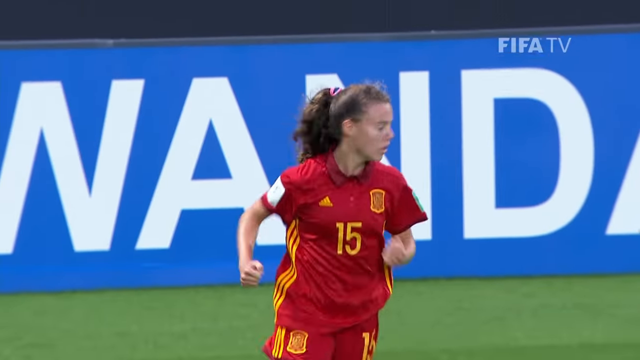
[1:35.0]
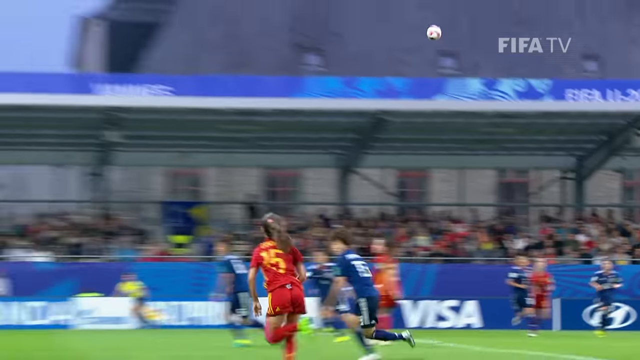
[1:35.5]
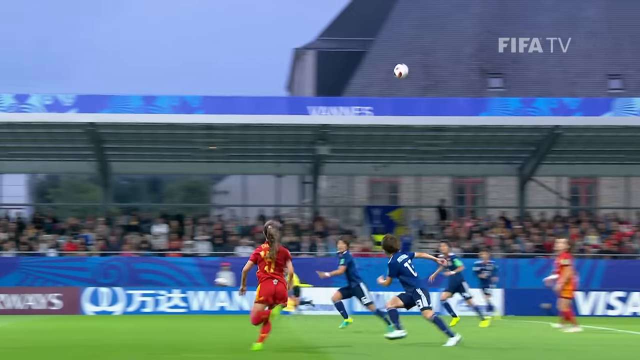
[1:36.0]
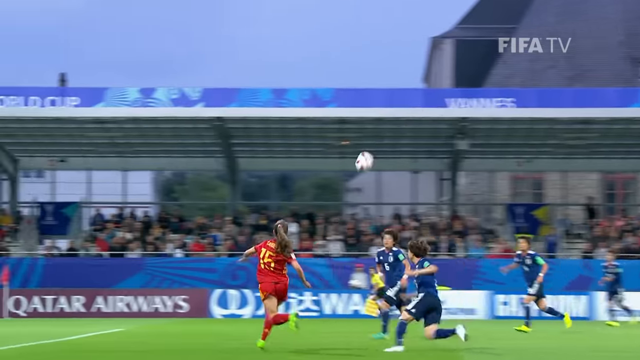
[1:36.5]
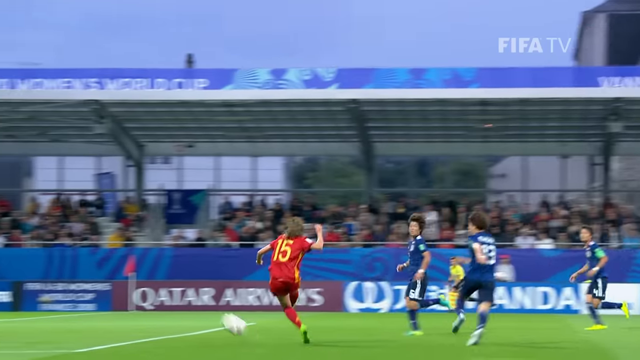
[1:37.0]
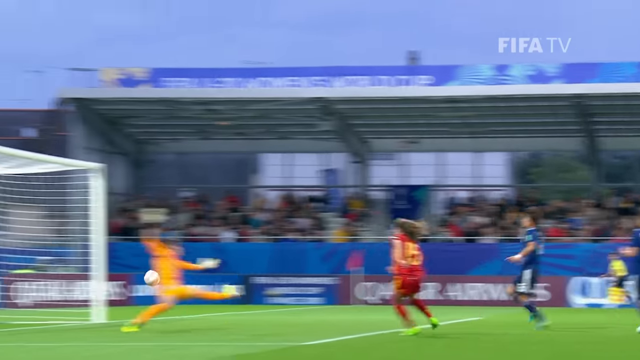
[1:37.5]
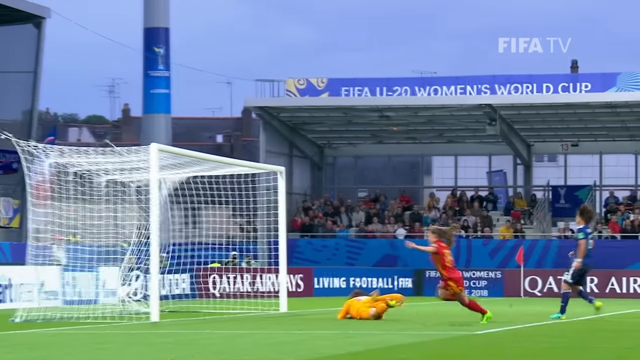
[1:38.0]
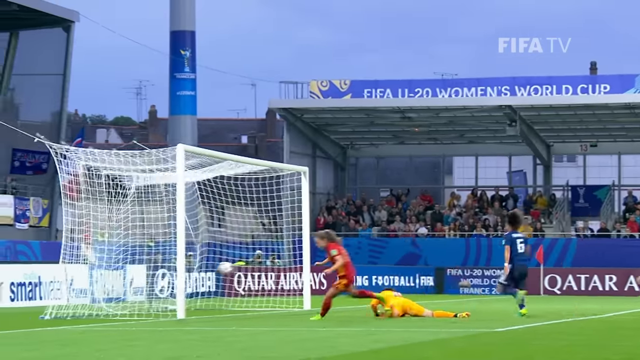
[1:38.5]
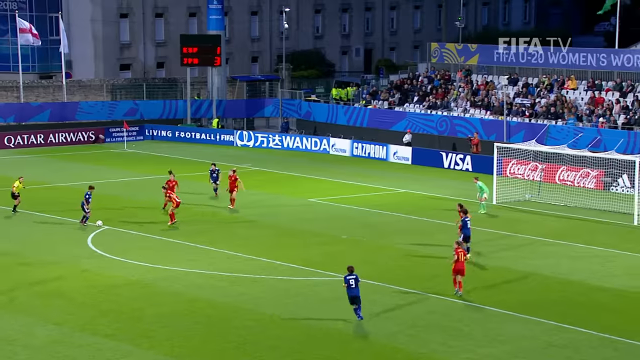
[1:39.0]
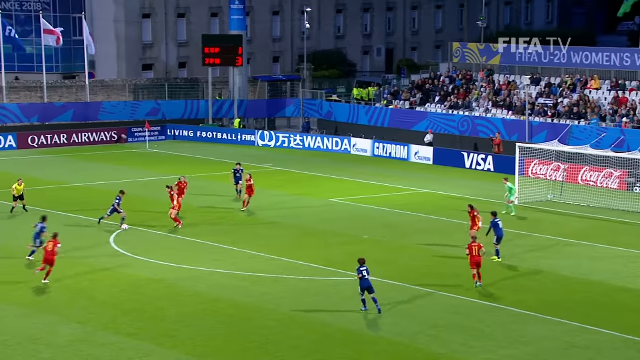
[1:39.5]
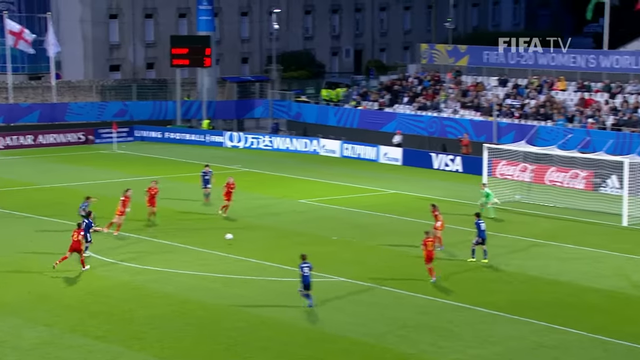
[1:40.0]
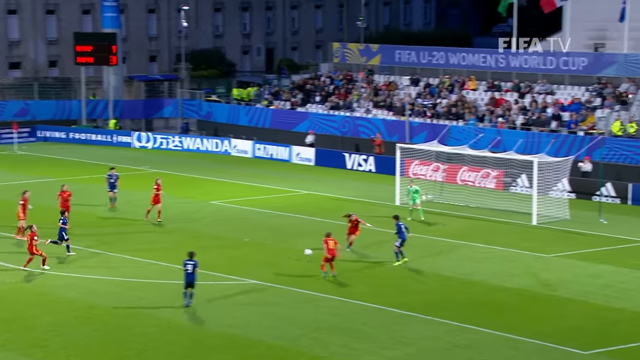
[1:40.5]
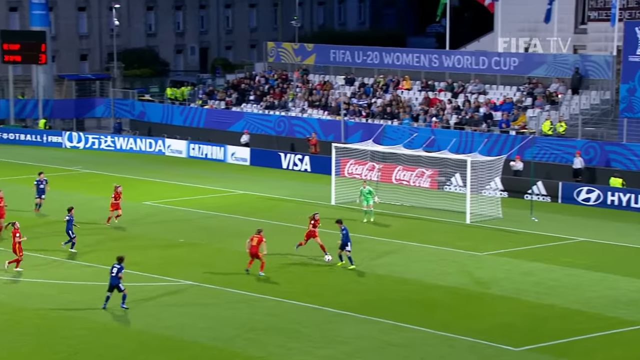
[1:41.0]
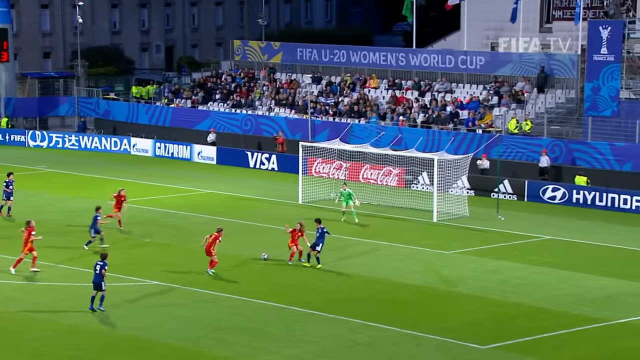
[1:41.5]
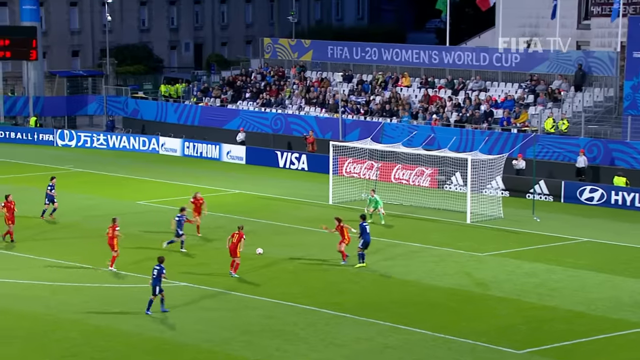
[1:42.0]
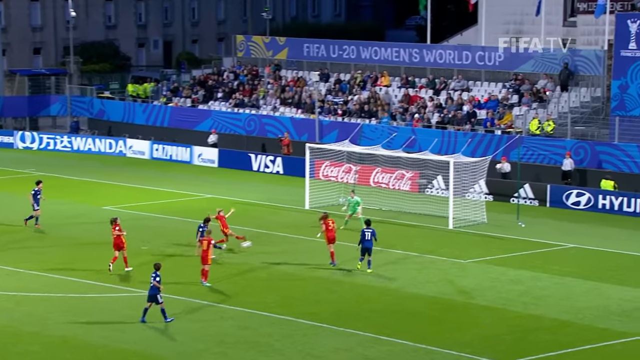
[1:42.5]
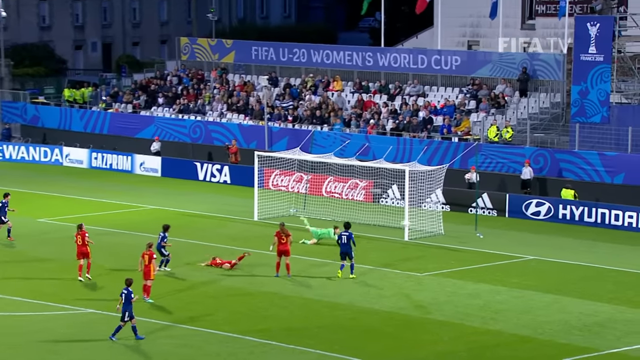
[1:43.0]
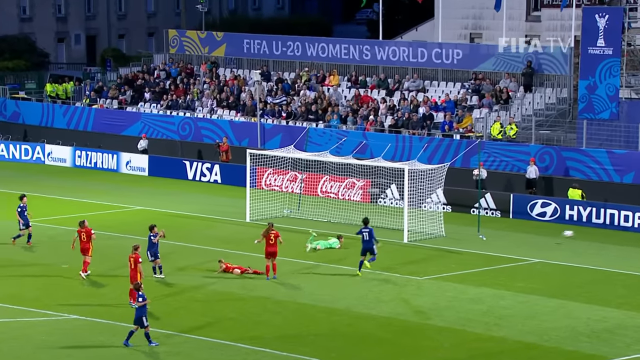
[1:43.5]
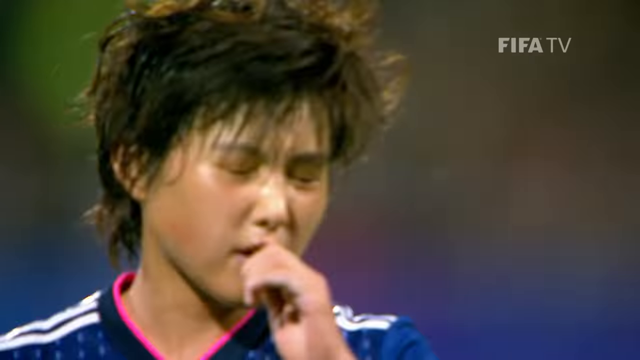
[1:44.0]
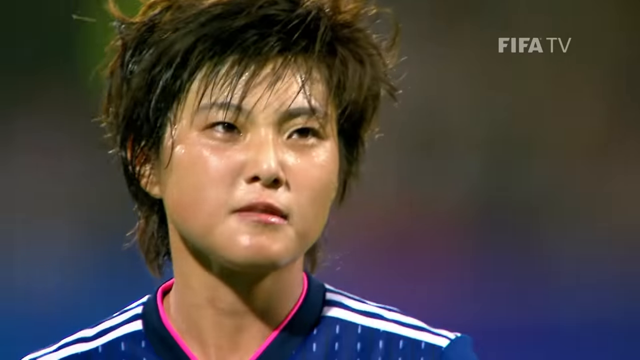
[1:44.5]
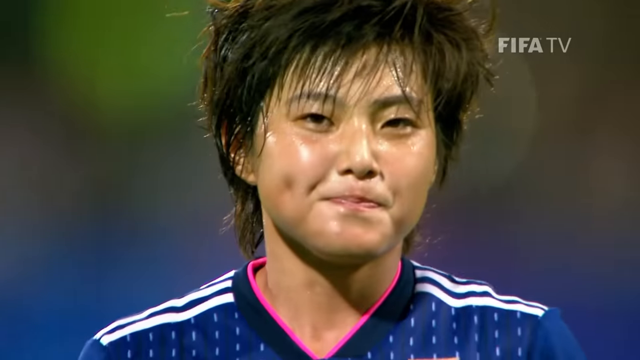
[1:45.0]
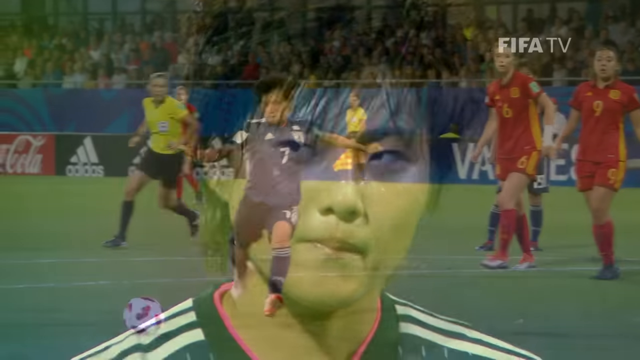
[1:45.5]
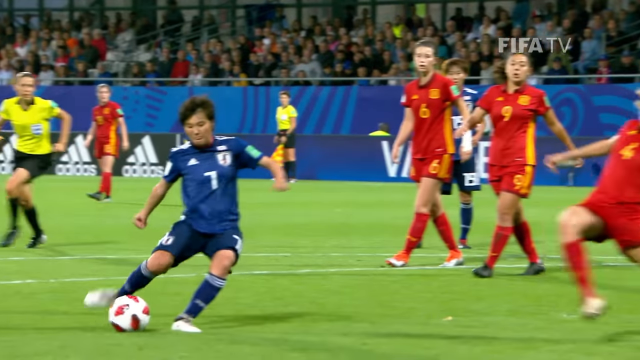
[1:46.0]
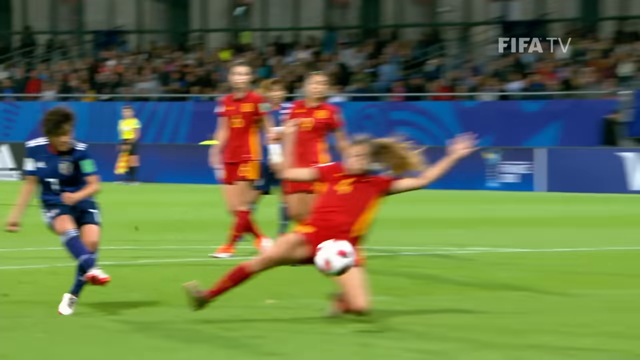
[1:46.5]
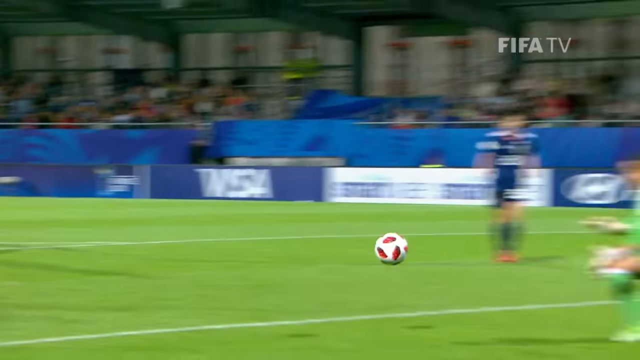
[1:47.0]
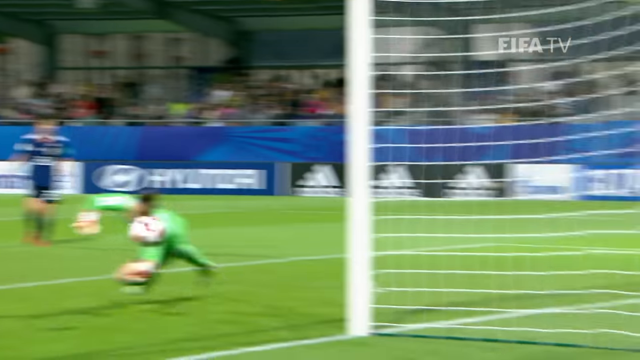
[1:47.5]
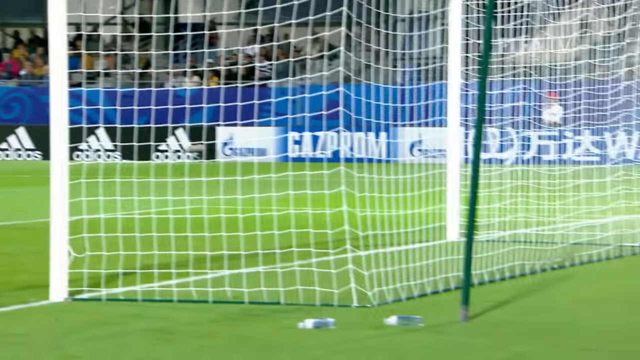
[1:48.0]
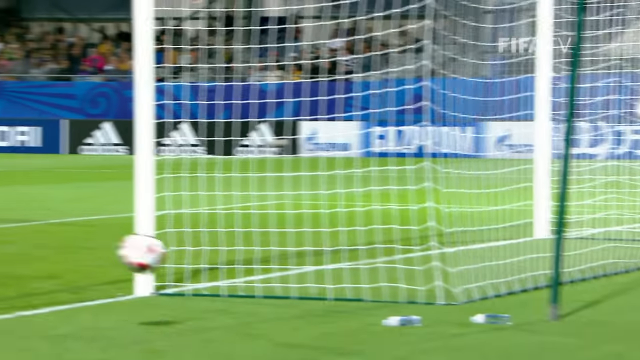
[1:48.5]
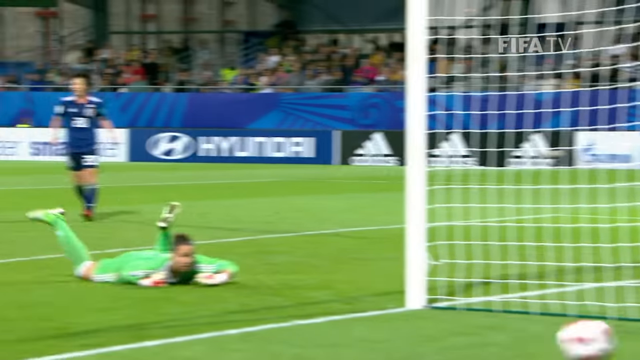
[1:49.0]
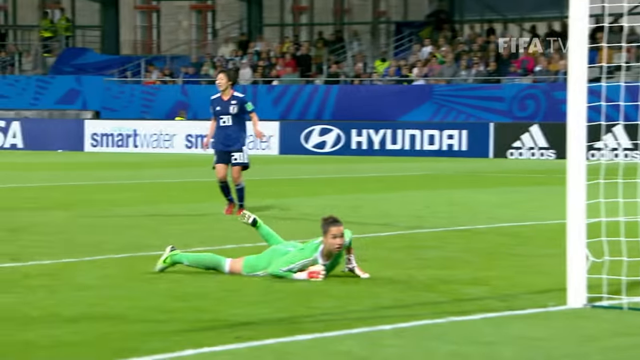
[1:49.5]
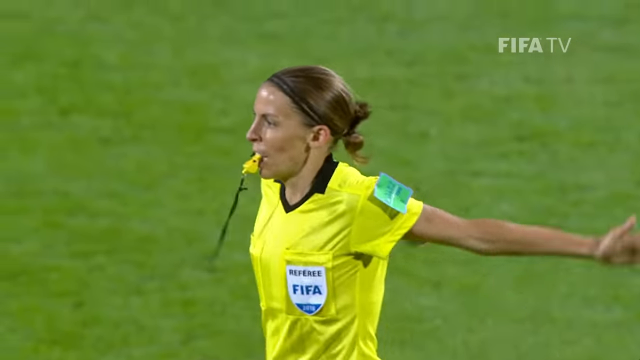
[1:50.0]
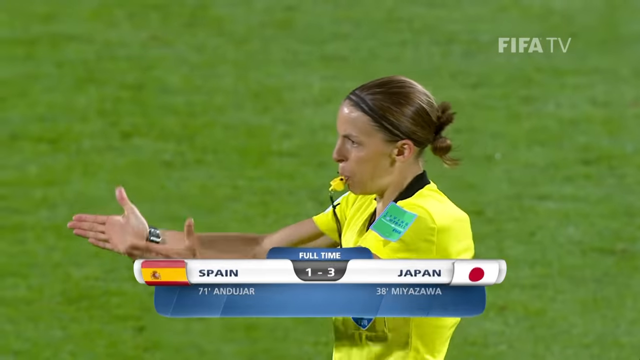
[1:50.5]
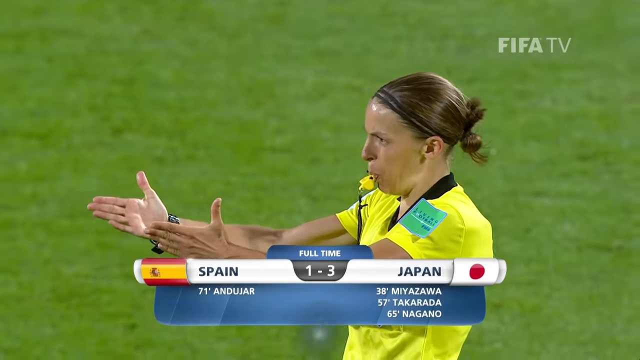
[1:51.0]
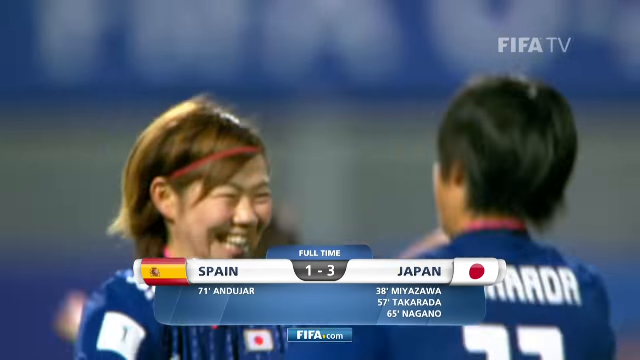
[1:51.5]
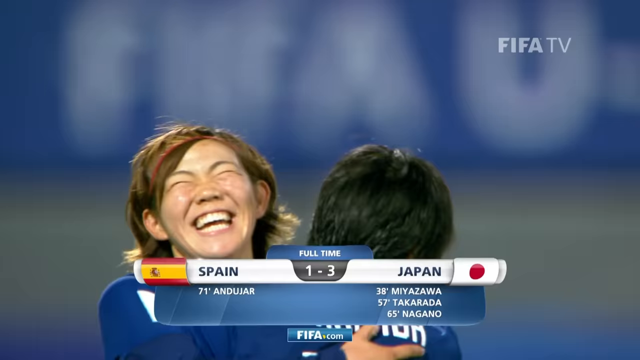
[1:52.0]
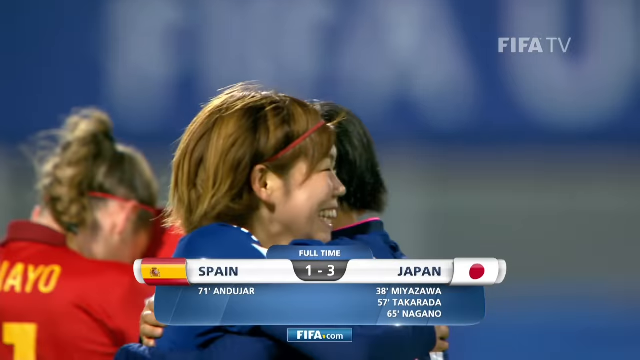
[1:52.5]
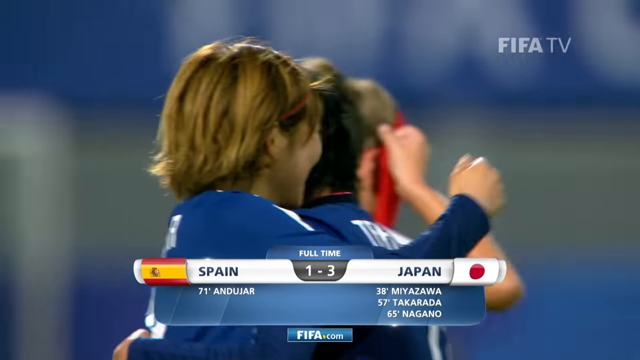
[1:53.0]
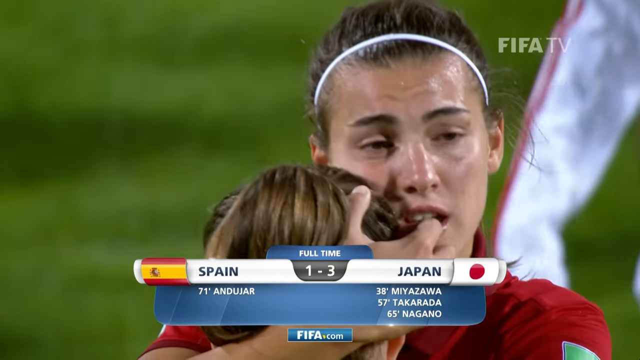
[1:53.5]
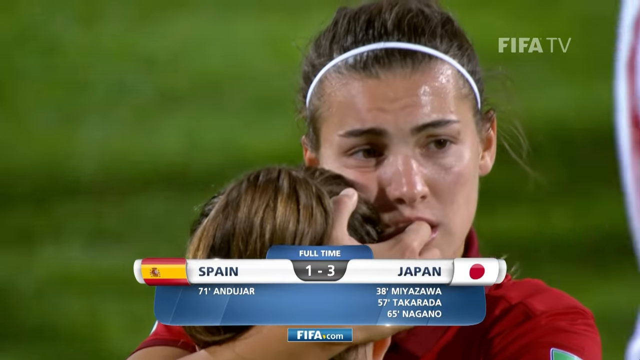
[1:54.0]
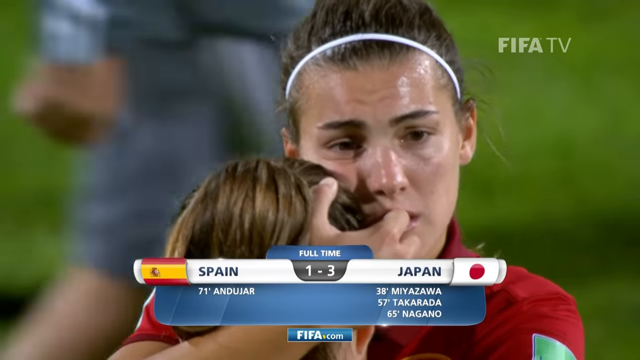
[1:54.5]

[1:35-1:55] A video of the 2018 Women's World Cup, with the Spanish team in red uniforms and Japan in blue. It is a highlight reel of the game, with a few other shots: the team walking out, a close-up of a man in the stadium who is apparently important, and the three coaches over an iPad, seemingly discussing plays. The highlights show the Japanese scoring, the one Spanish player scoring, and a couple of shots of the goalie blocking the shot. Japan wins 3 to 1. The rather small stadium is blue, with advertisements along the base of the seating wall. At the end the Japanese players are together, jumping up and down, with confetti coming out of the sky.